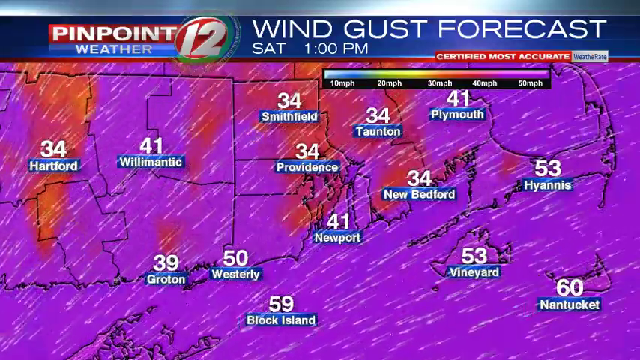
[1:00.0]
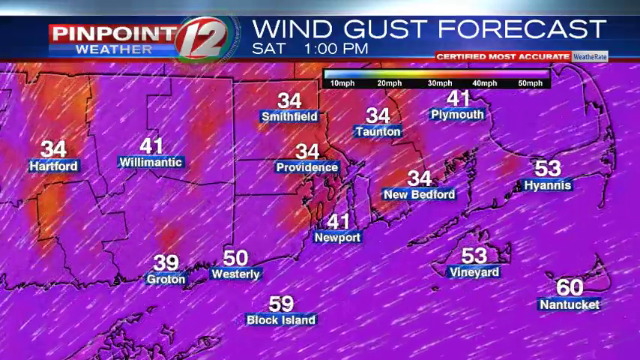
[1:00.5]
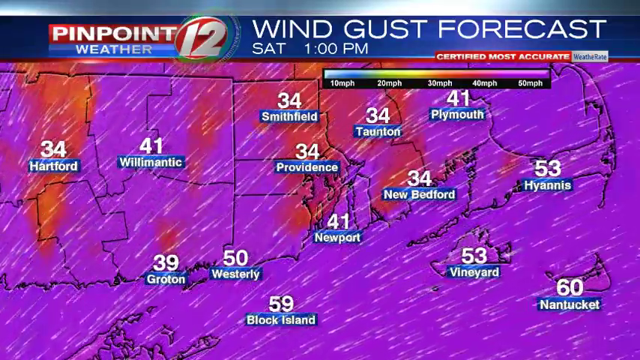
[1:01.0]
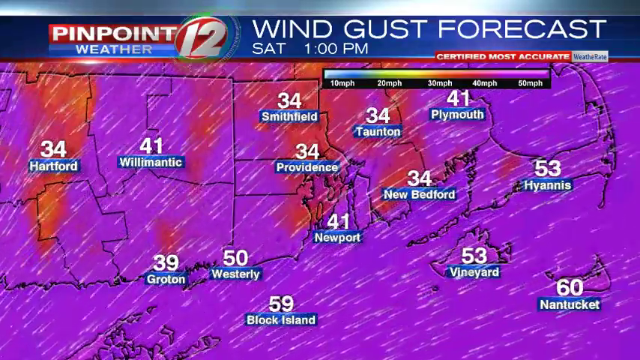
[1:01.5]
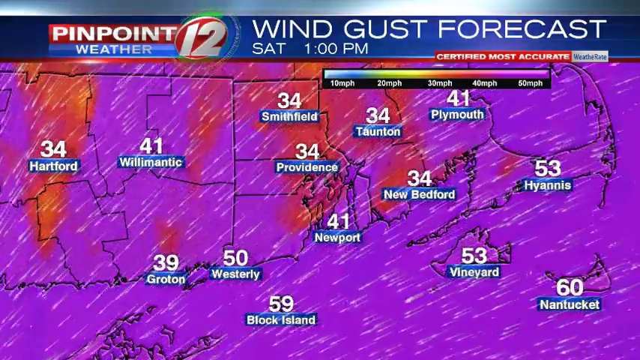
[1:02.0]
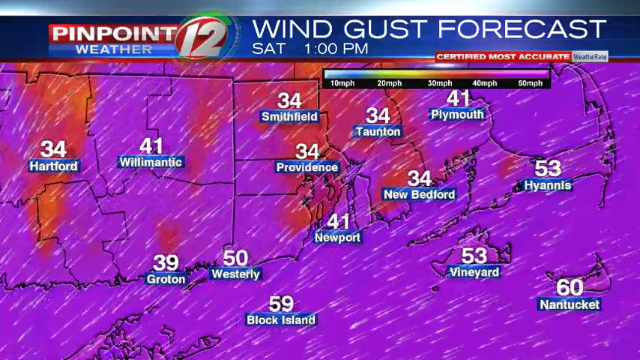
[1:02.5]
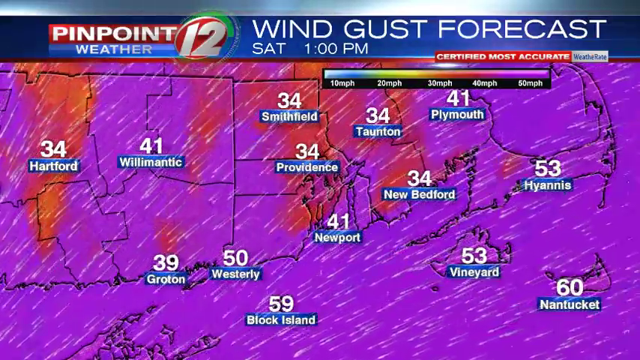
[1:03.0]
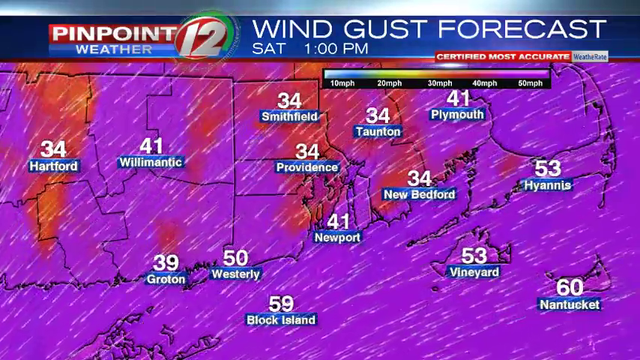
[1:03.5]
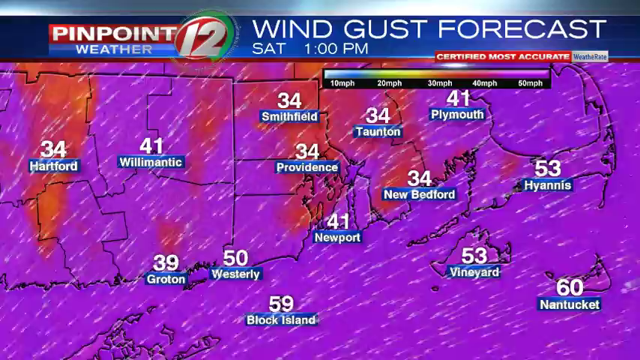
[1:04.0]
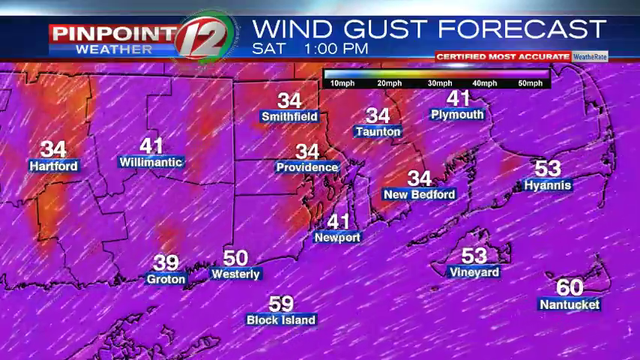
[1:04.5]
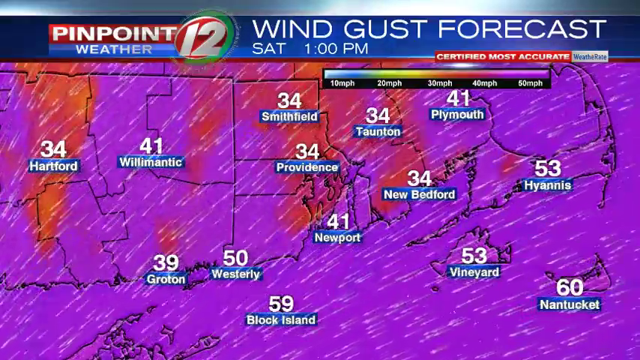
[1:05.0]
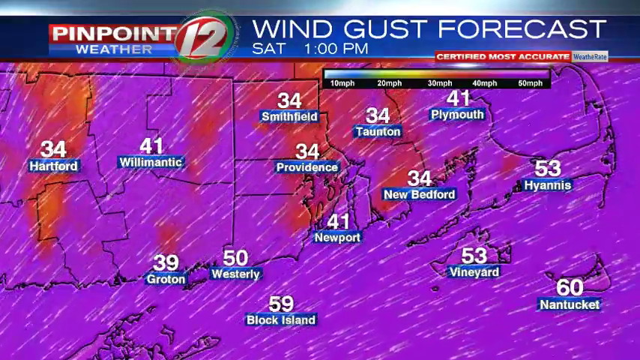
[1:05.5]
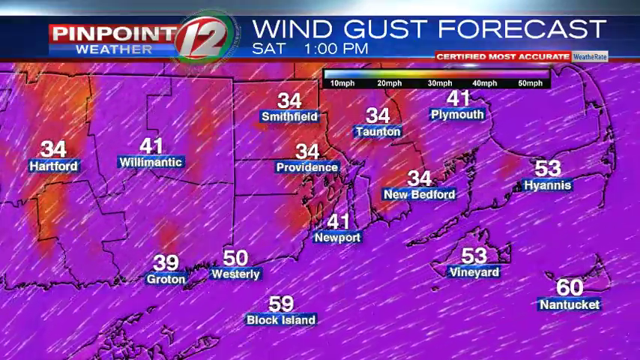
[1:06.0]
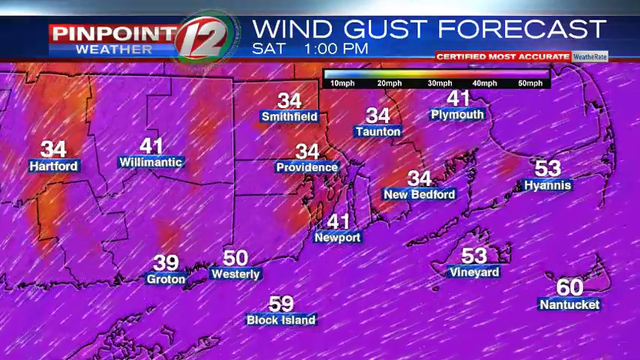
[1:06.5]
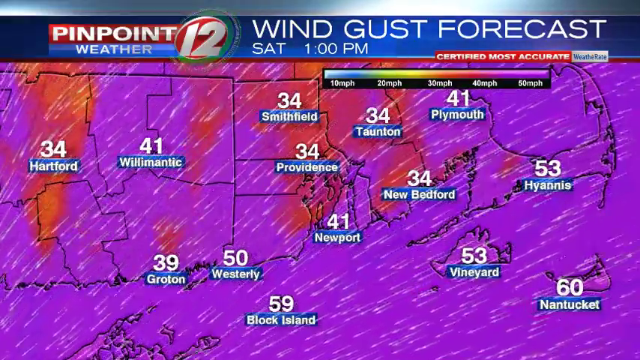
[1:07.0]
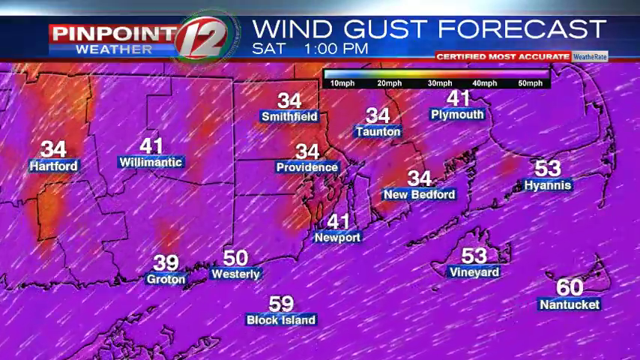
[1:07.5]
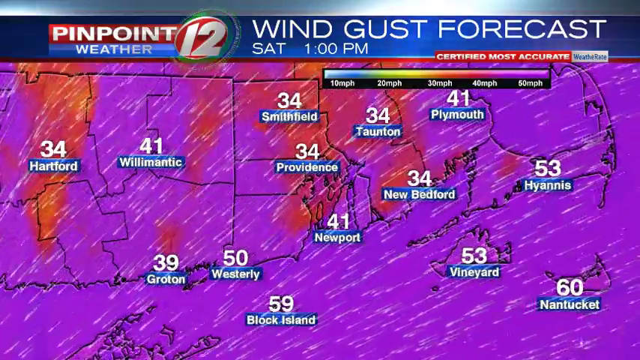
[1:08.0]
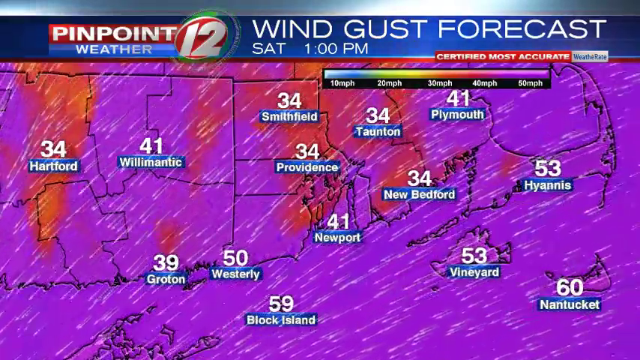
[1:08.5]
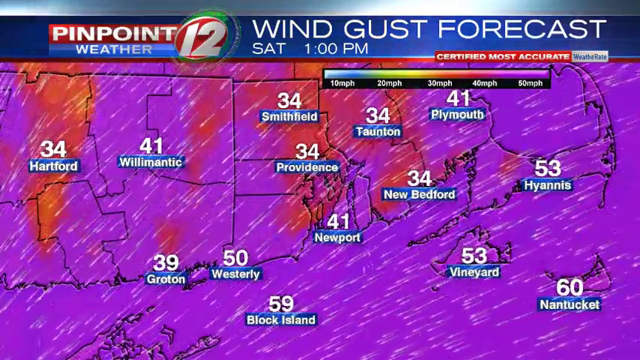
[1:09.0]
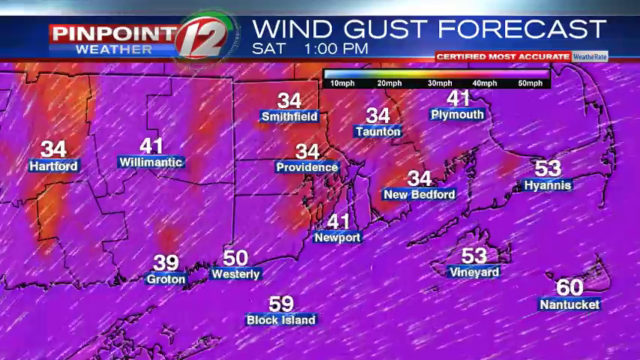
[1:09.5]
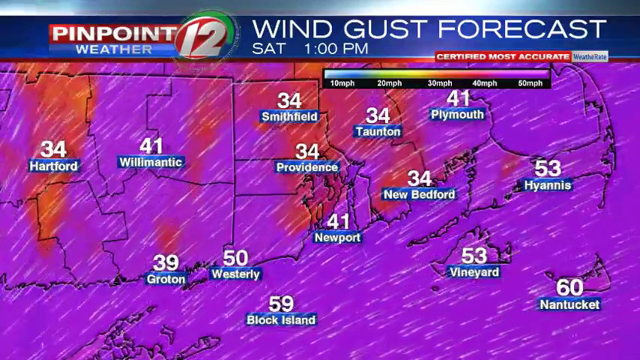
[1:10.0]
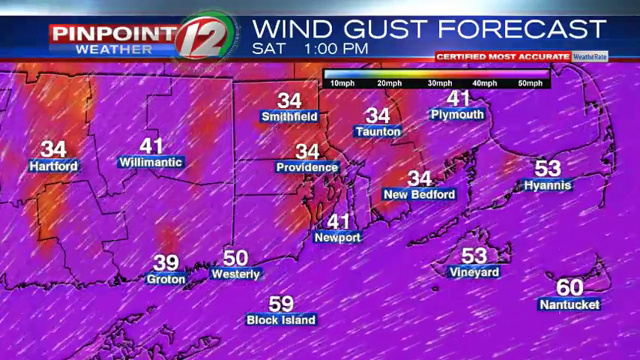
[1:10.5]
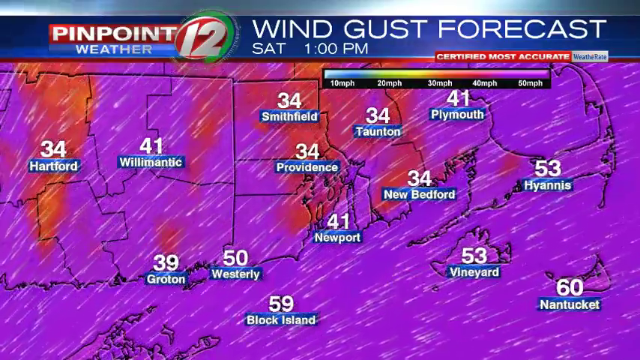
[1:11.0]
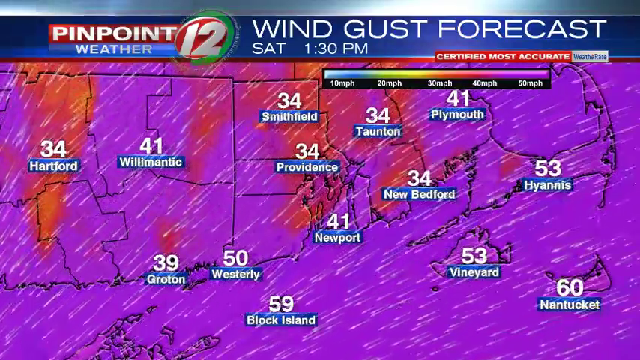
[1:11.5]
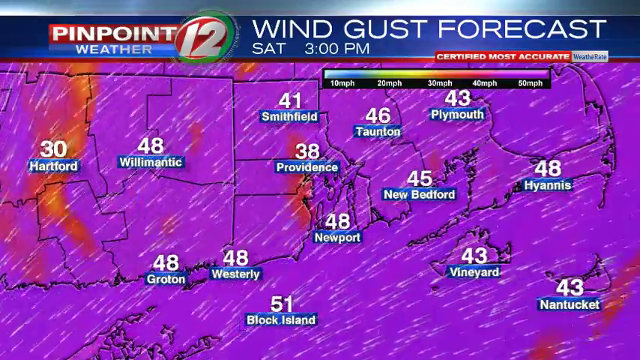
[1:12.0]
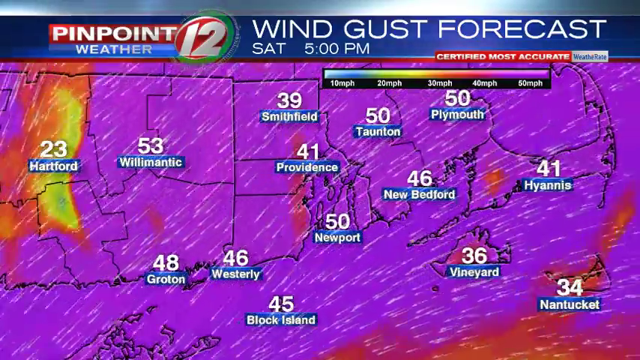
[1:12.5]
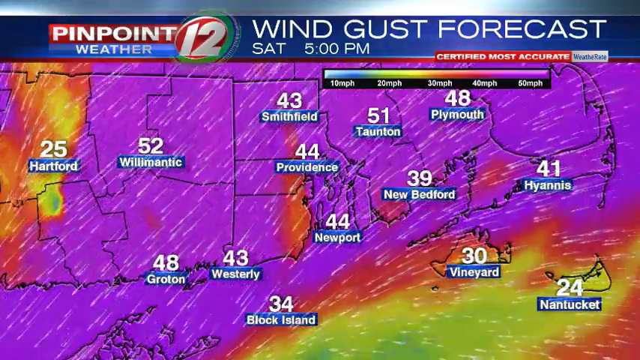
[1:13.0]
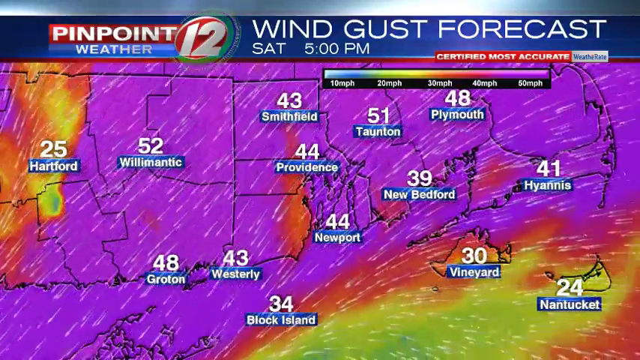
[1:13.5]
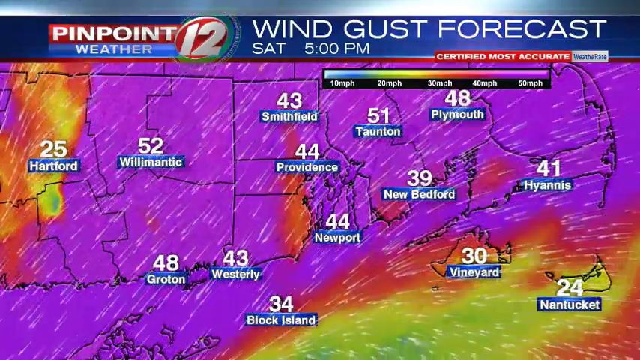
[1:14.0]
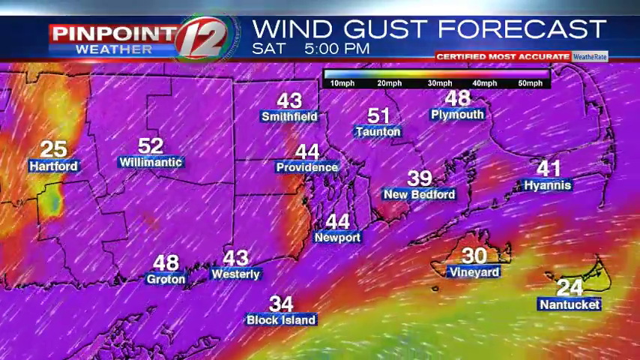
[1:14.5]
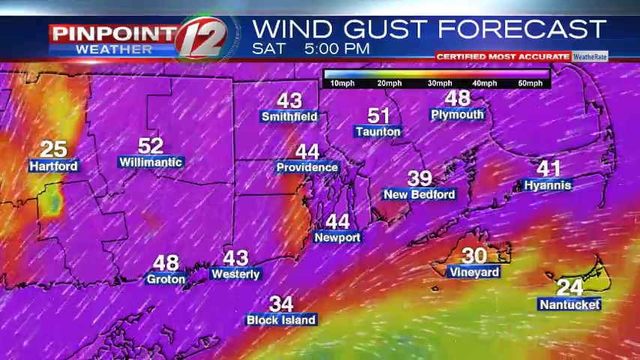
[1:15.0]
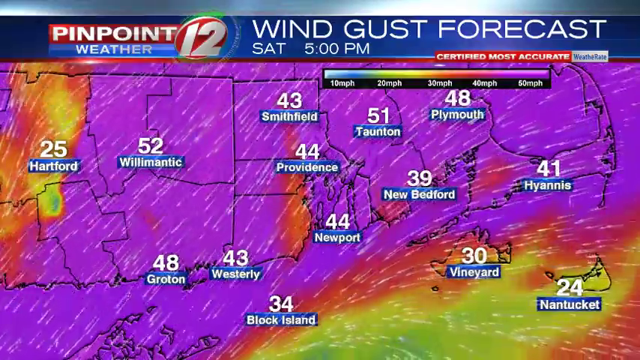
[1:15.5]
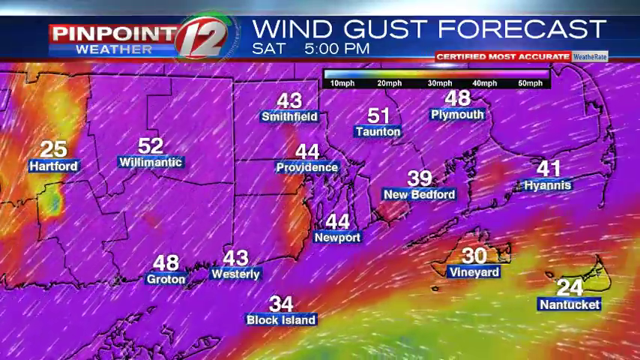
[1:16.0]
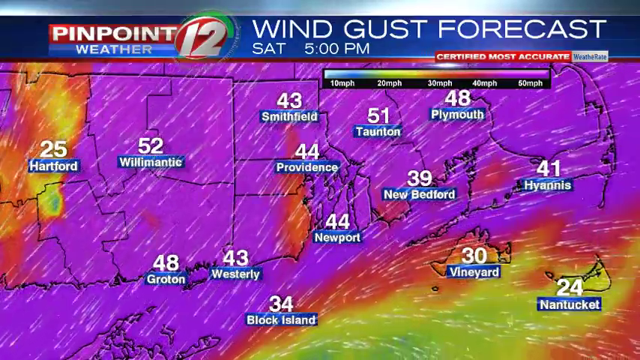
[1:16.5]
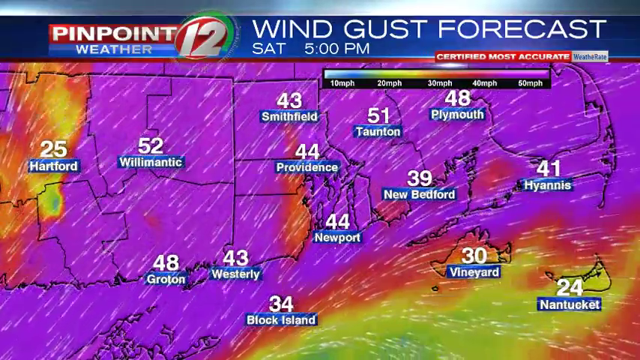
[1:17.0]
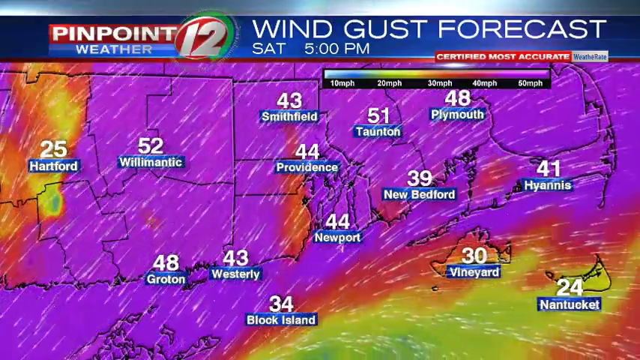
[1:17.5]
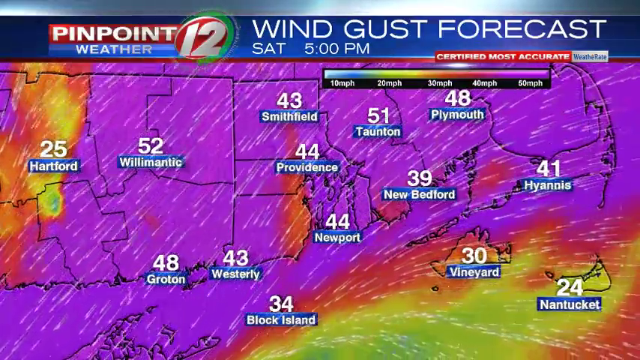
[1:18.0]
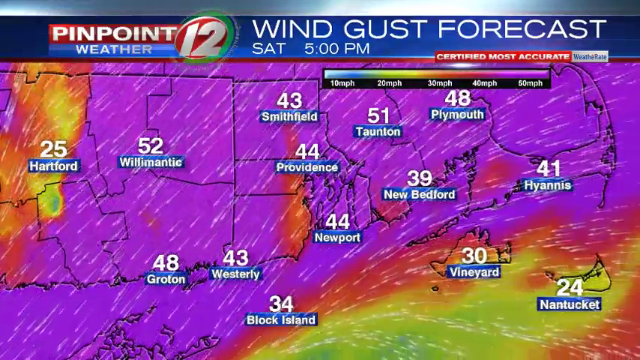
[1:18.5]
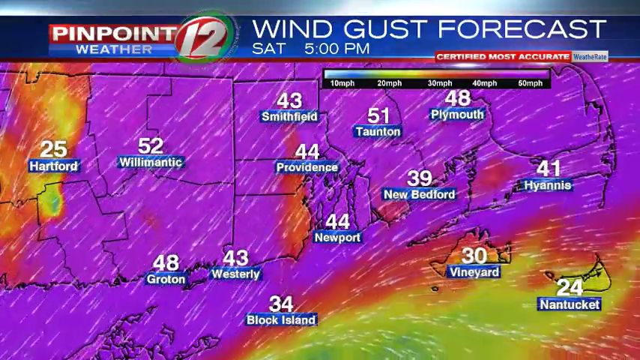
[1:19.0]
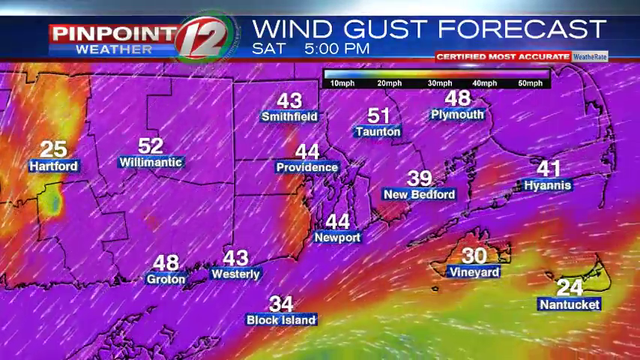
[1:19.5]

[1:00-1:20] A map of the southern part of New England fills most of the shot, showing Connecticut, Rhode Island, Cape Cod, the lower part of Massachusetts, Martha's Vineyard and Nantucket. Numerous towns are named across the region, each with a number above it indicating the wind gust speed. The top of the screen reads "pinpoint weather 12 wind gust forecast," starting at Saturday at 1 p.m. The area is mostly purple, indicating possible 50 mph gusts, with some orange areas running vertically through the states indicating a maximum wind gust speed of 30 mph. White streaks move from the upper right to the lower left of the screen, indicating the wind direction. The image gradually progresses through Saturday to 5 p.m., when larger areas of yellow and orange appear, primarily in the ocean below Massachusetts and some in the far western part of Connecticut, indicating lower wind gust speeds.